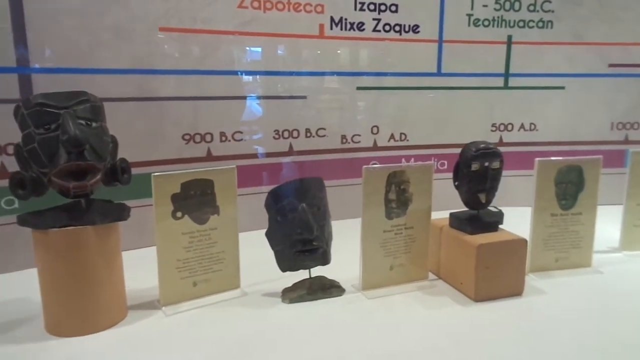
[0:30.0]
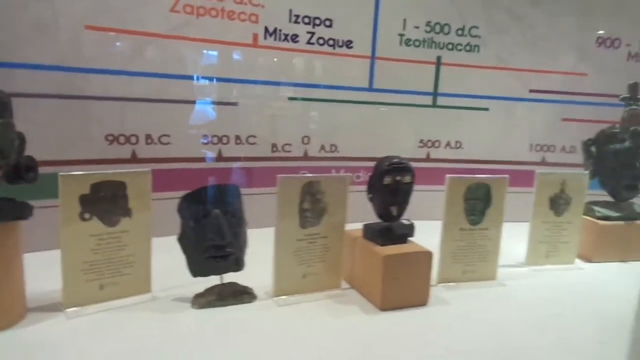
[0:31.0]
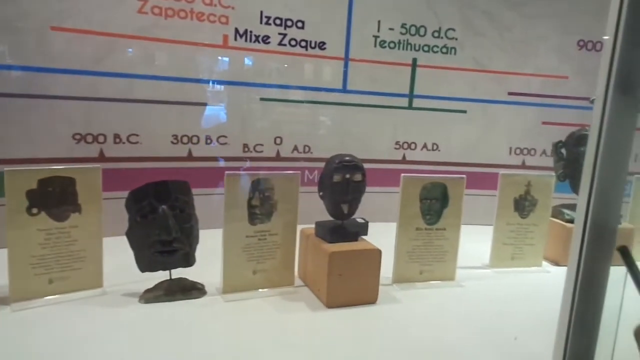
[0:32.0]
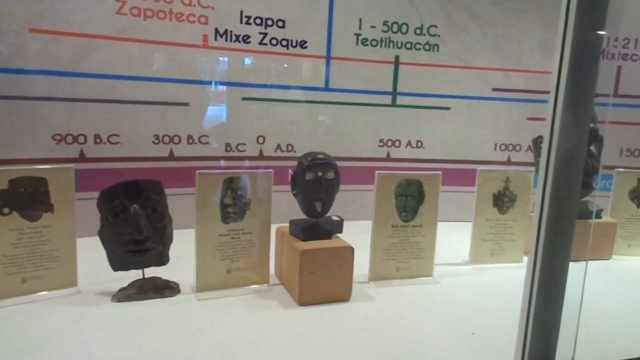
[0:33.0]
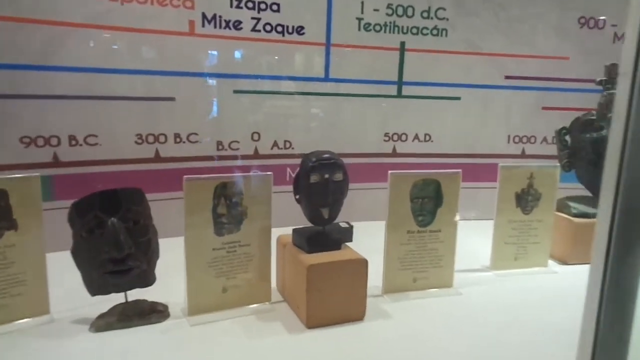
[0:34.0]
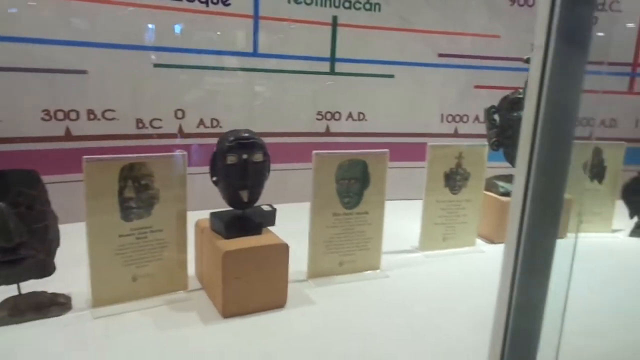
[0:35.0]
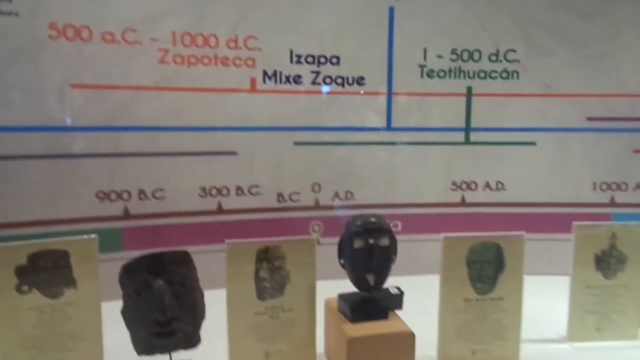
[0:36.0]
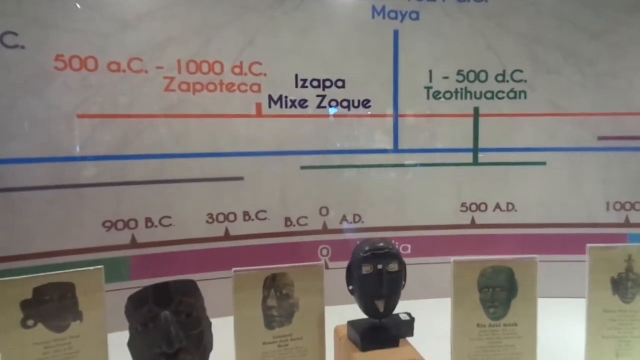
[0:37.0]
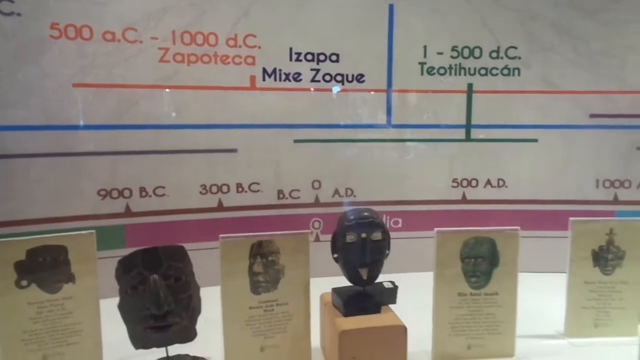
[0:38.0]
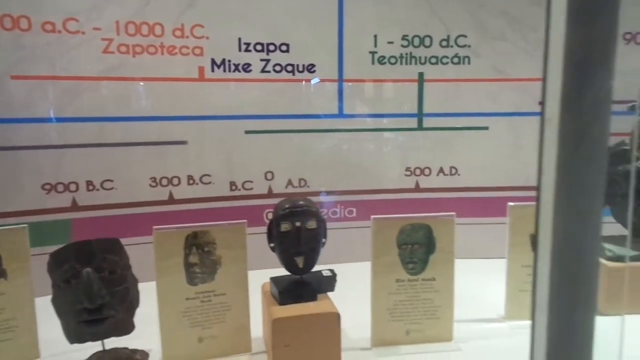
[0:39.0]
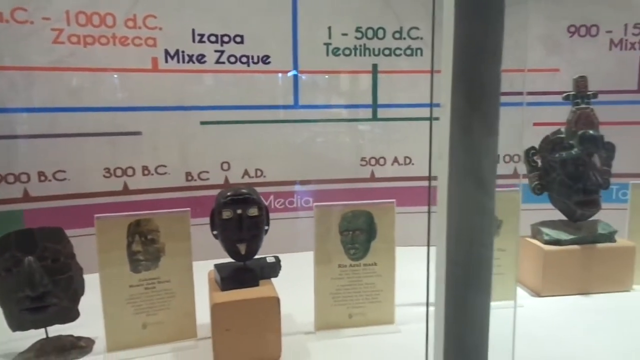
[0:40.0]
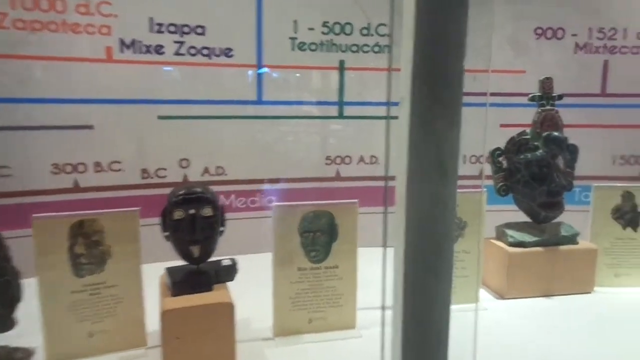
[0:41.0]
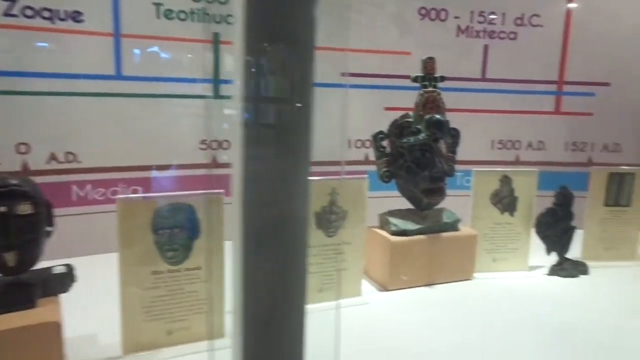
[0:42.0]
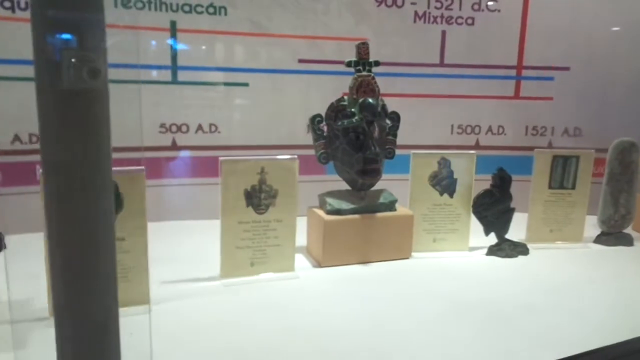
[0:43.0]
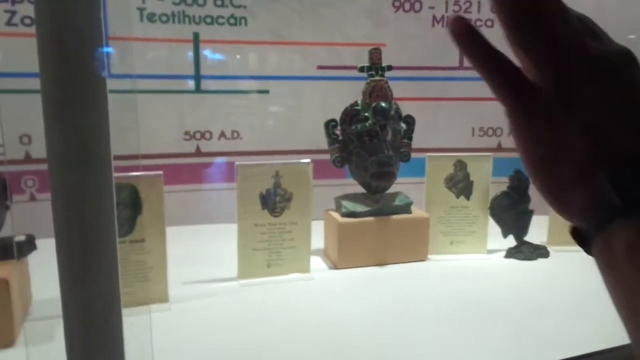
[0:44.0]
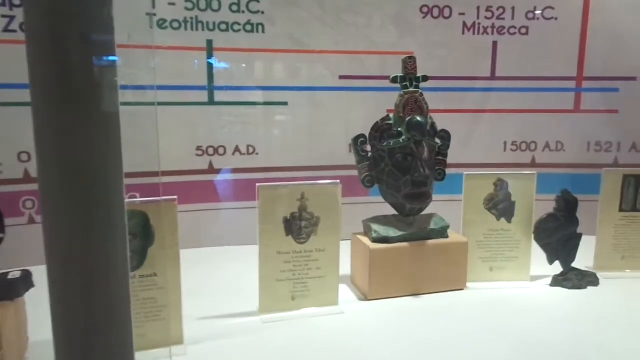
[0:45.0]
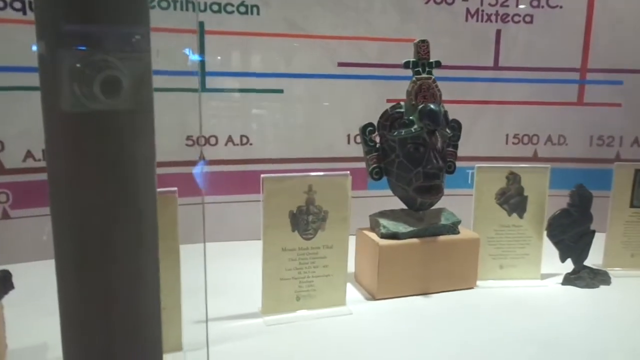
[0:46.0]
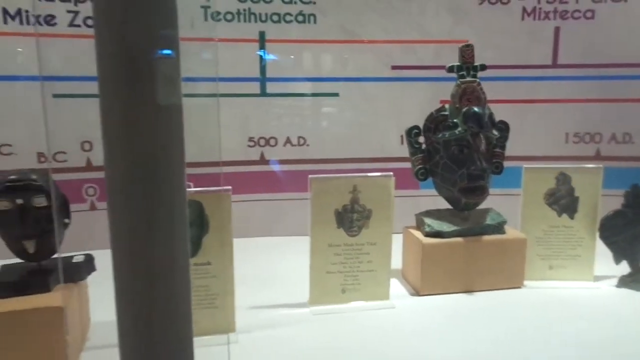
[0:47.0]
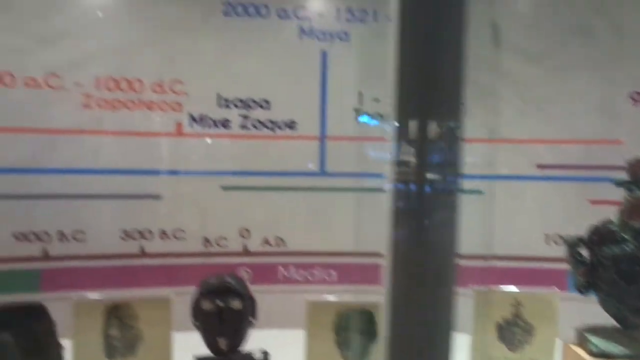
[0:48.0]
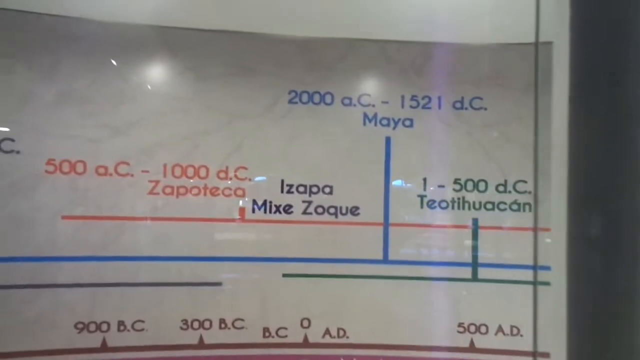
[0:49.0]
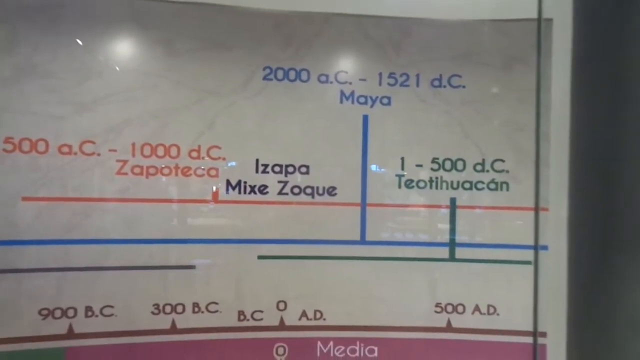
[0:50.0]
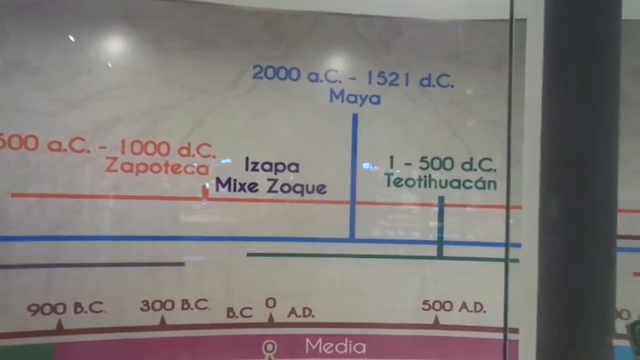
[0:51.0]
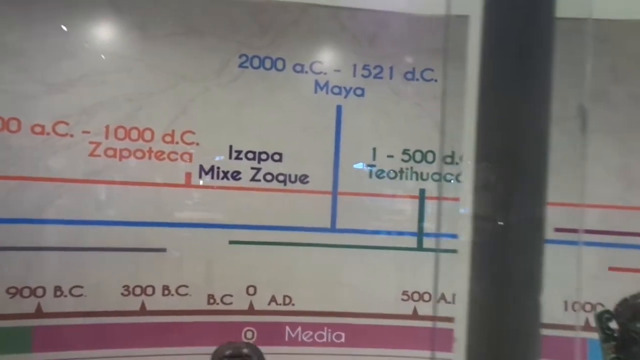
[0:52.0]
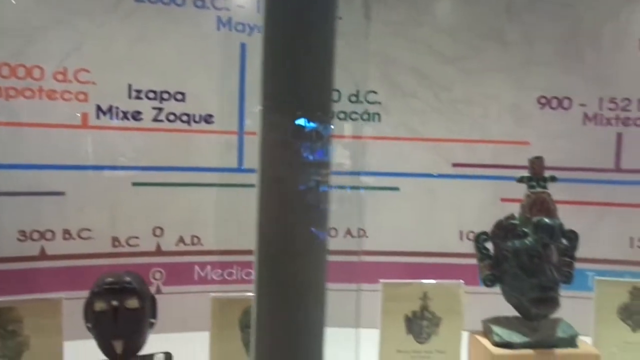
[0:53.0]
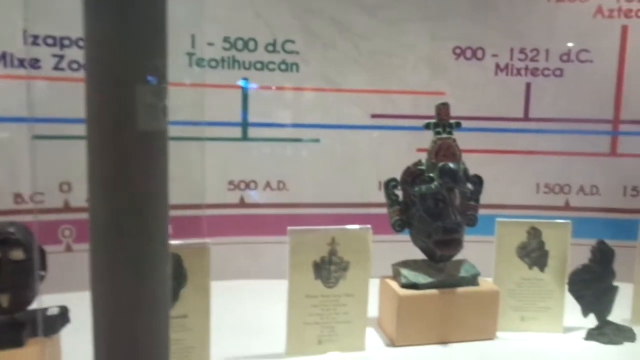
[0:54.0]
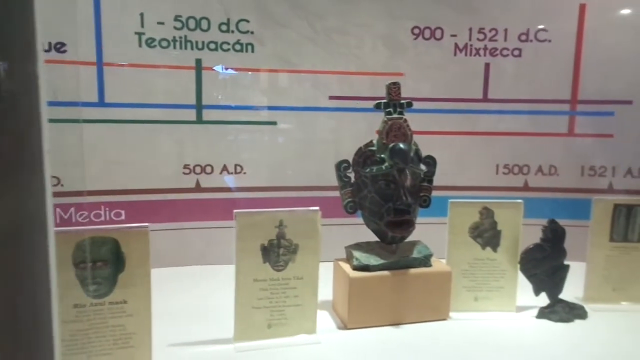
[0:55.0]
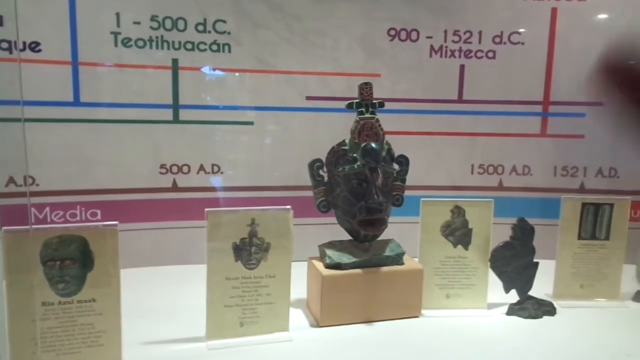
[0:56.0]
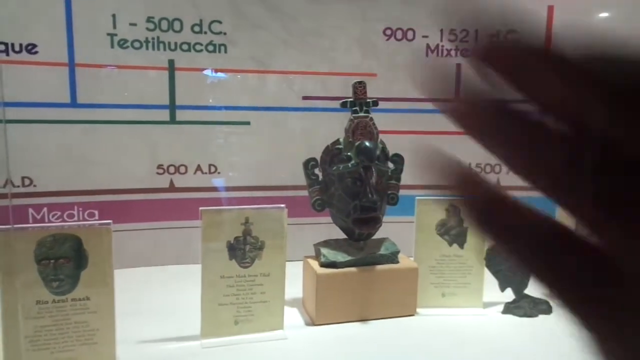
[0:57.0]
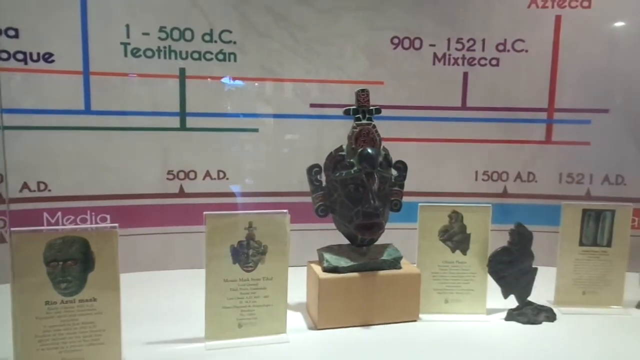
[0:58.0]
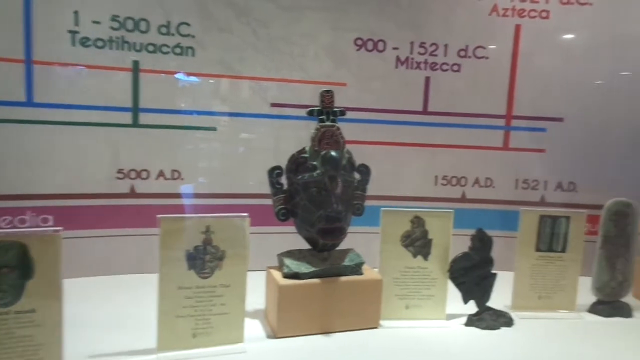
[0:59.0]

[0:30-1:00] The head figurines, which look Neanderthal-like, are shown with "900 BC," "300 BC" and "500 AD" written in the background. Above them is text in a different language, along with green, blue and red lines and writing in red, black and green. The camera pans further across the figurines and pictures, revealing other unusual symbols, while someone explains what is shown. The displays are behind glass partition windows. One label says "maya," and another appears to read "mistika"; the 300 BC and 900 BC dates remain visible.